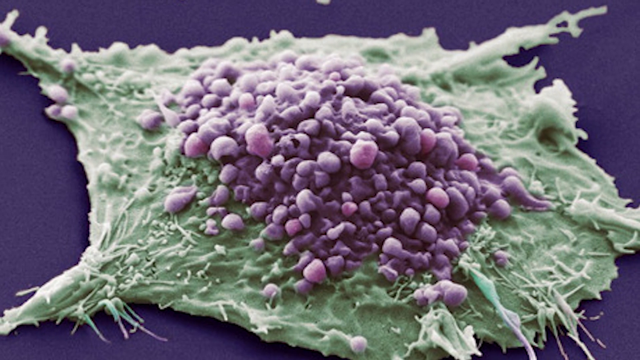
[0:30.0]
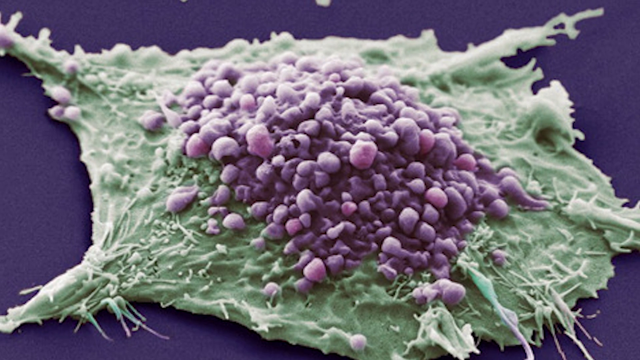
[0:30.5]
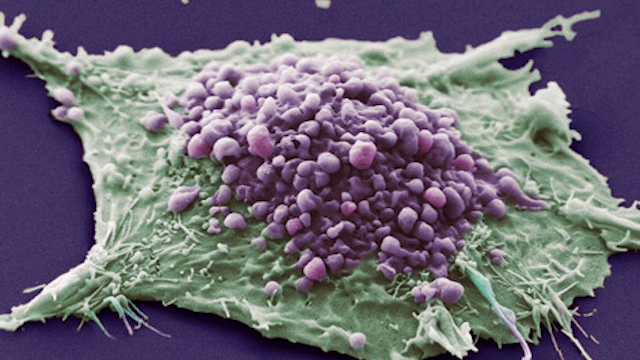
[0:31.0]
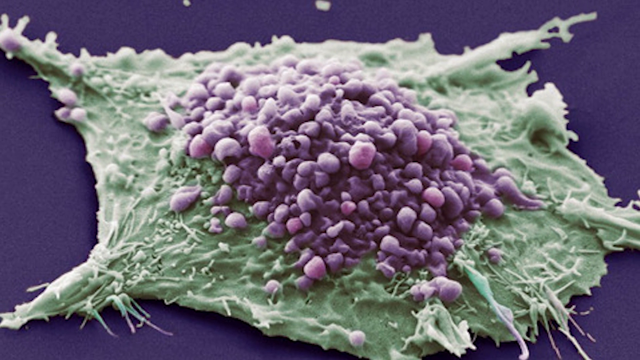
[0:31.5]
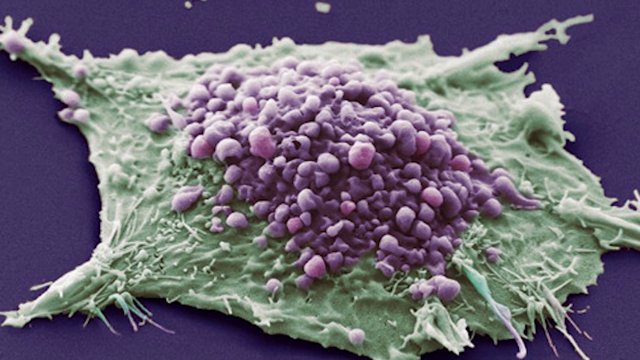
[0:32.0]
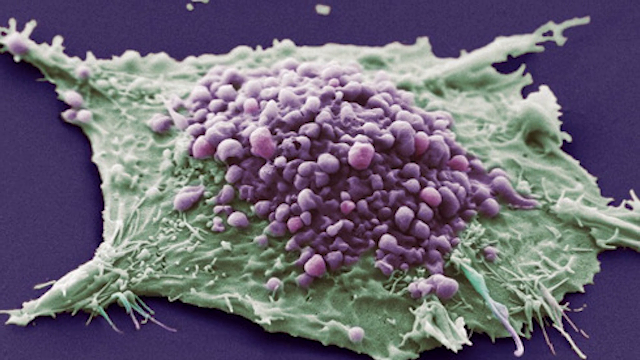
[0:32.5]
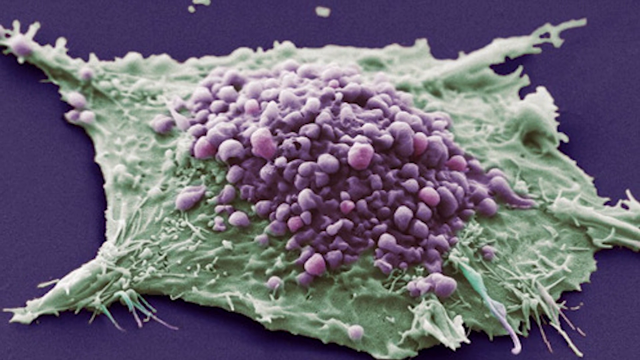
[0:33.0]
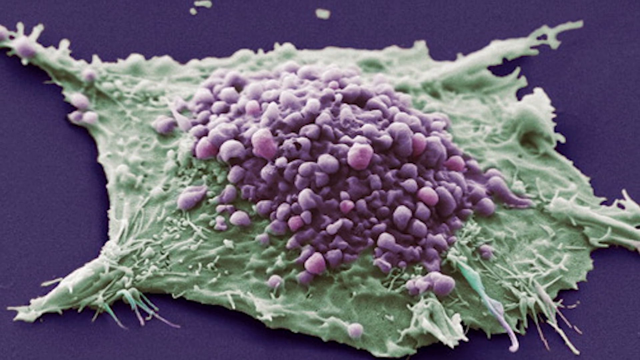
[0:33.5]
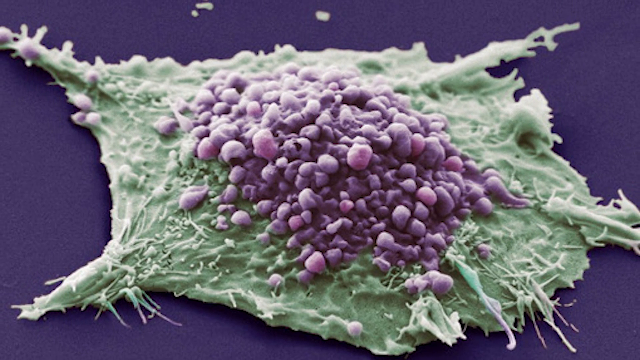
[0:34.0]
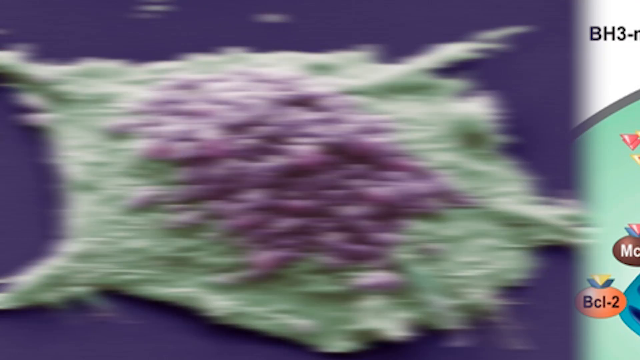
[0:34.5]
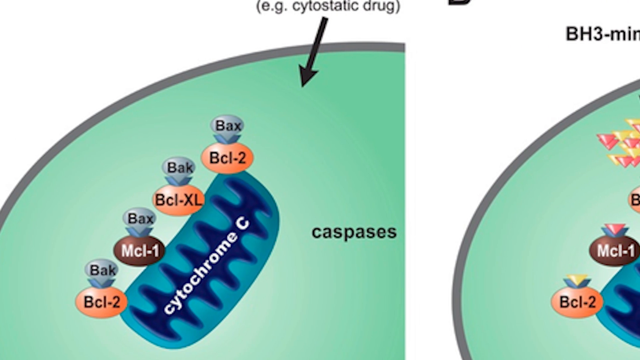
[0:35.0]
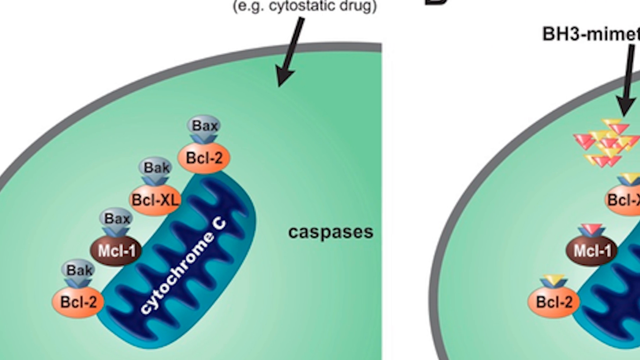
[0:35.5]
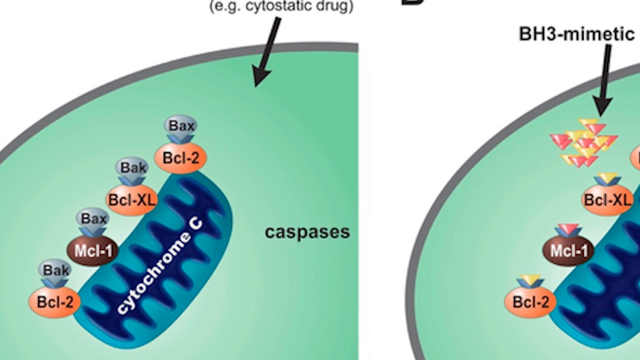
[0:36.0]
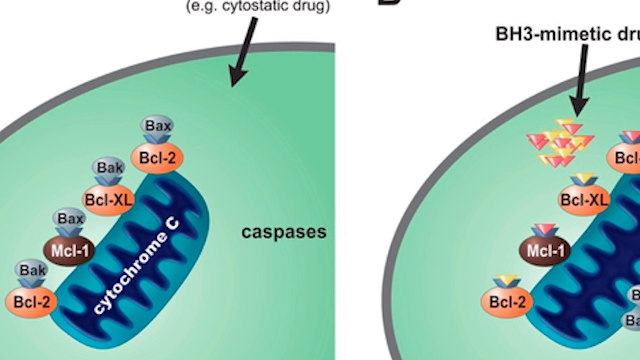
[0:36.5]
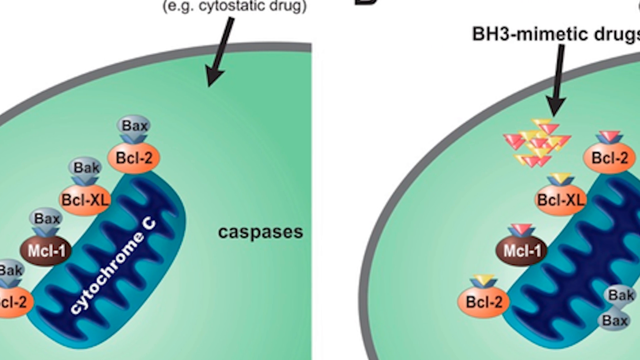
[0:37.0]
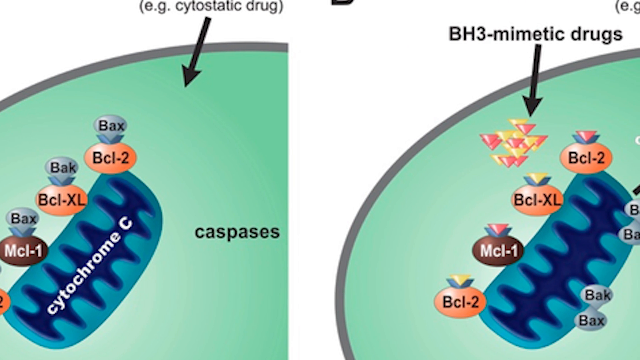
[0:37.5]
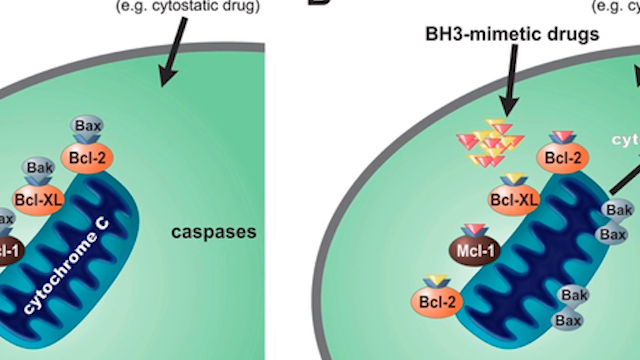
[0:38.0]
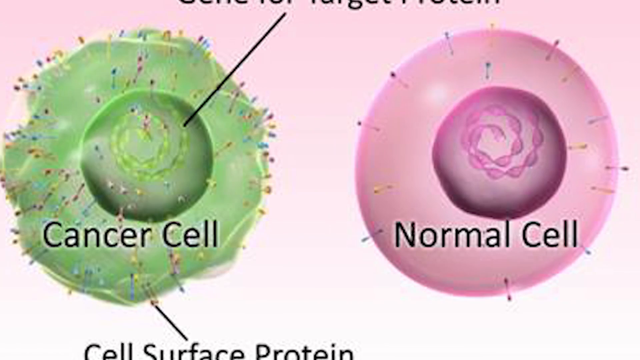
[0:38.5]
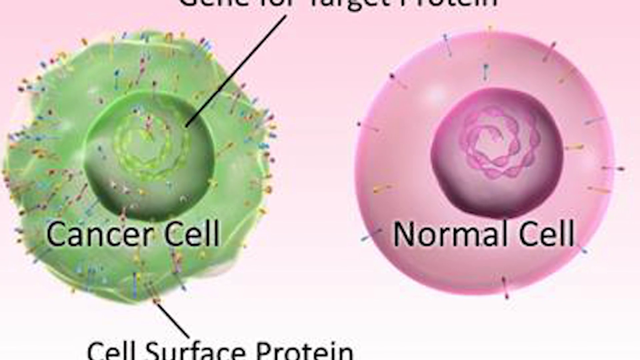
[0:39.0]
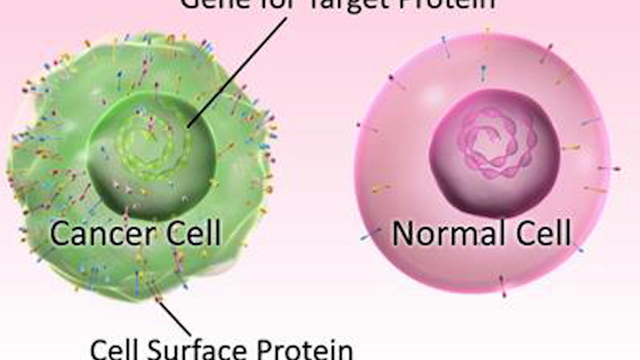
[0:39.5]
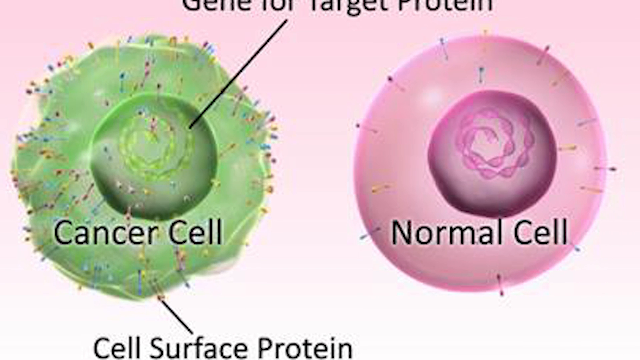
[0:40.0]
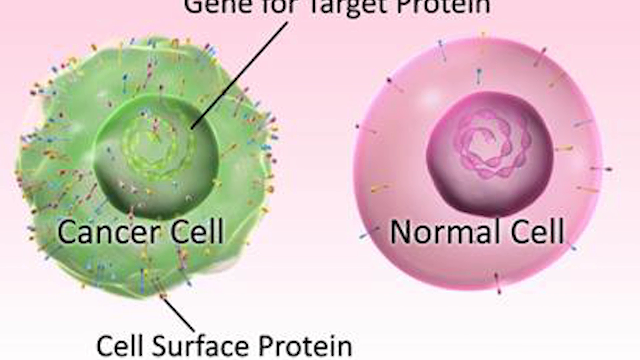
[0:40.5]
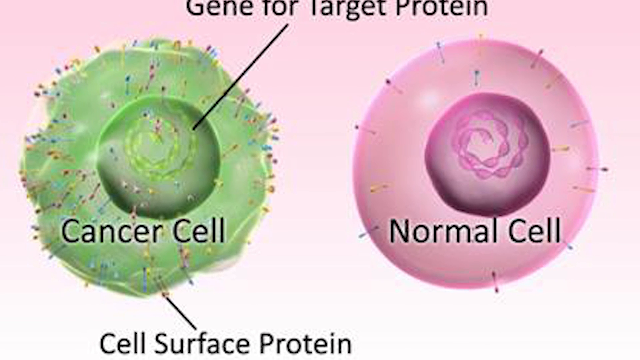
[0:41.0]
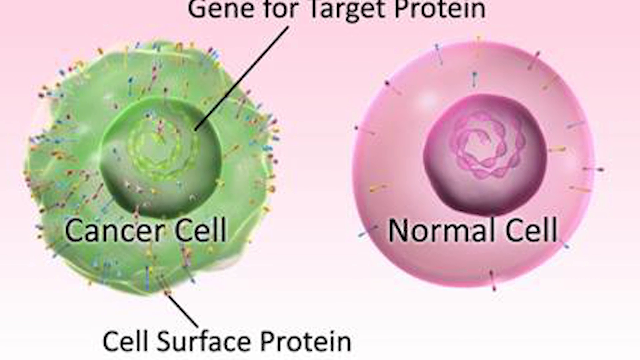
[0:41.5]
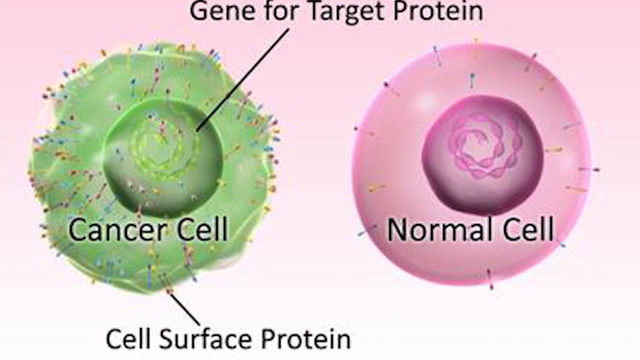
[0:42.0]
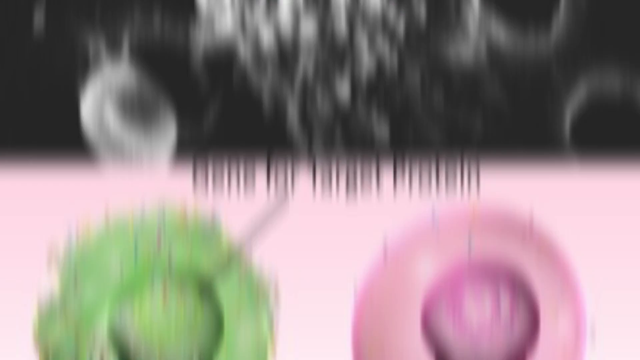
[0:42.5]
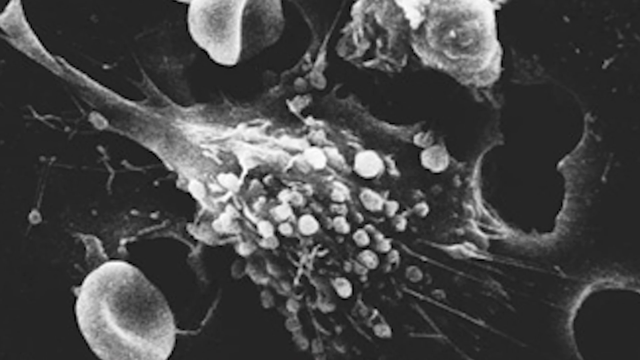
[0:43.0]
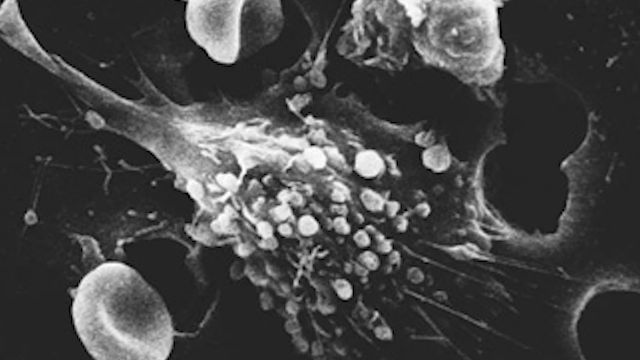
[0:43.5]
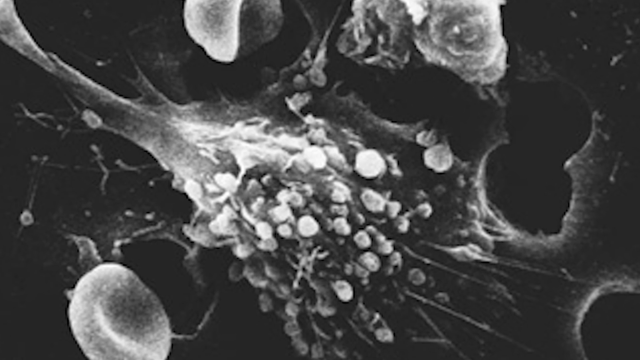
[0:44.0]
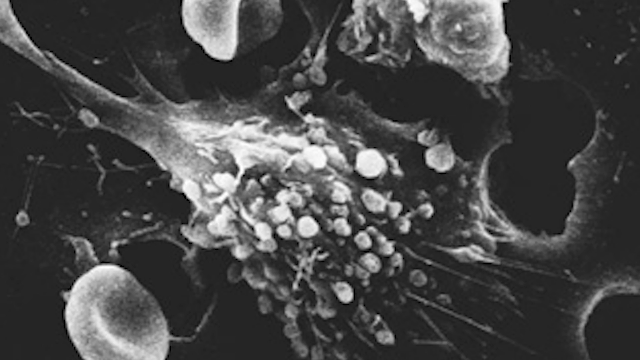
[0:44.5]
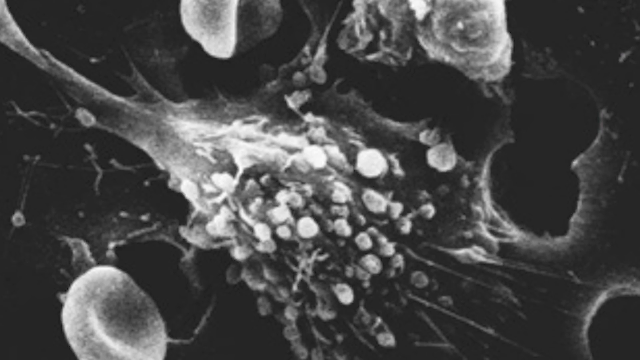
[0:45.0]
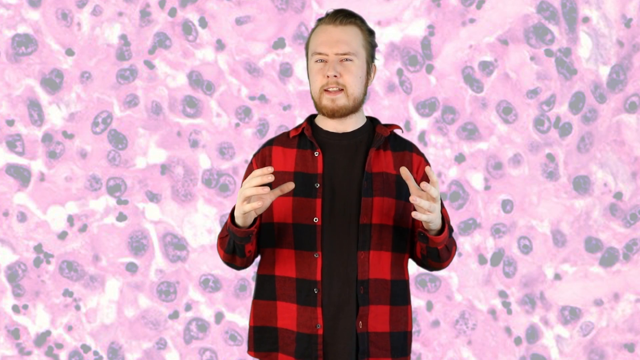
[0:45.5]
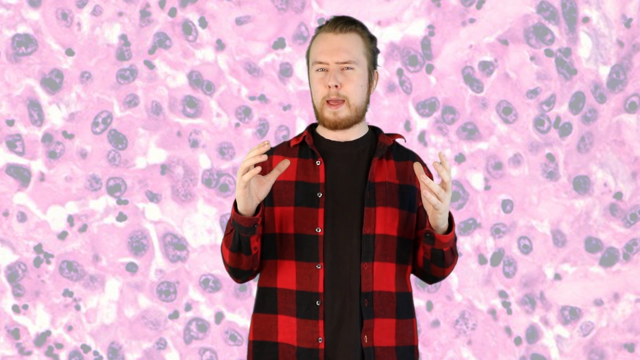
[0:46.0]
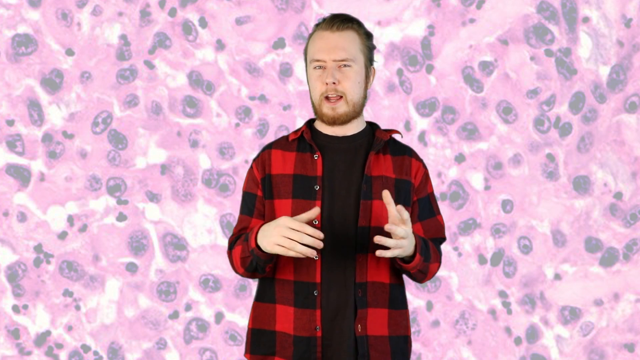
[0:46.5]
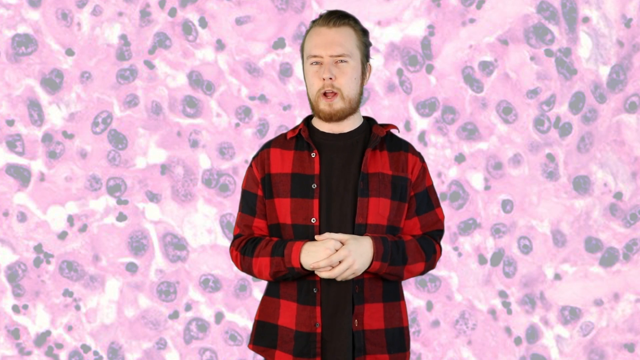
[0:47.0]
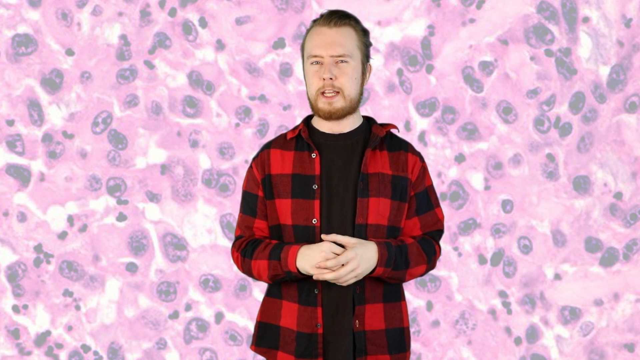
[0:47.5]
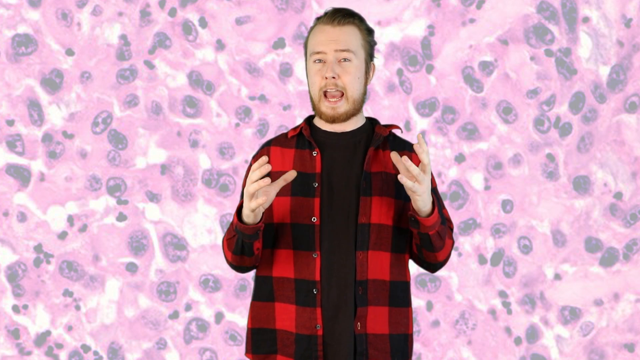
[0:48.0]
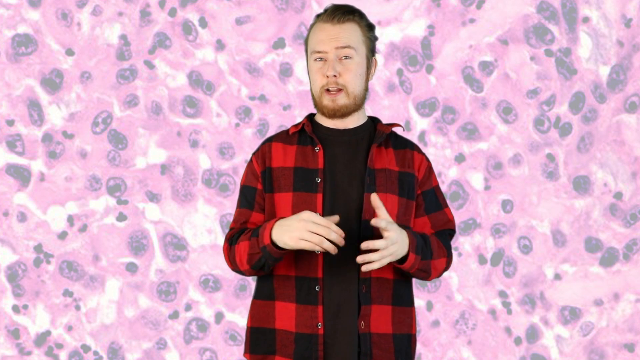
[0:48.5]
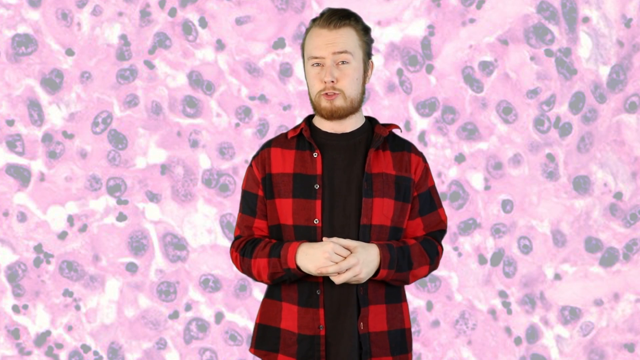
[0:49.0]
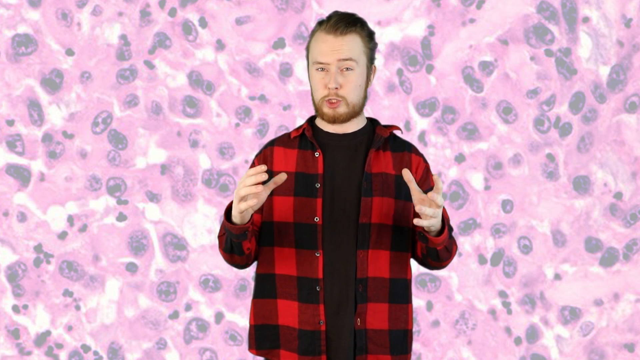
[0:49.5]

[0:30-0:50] A close-up shows what looks like a group of molecules resembling a bunch of purple grapes plopped onto a big blob of green play-doh. The camera slowly zooms out, and the video switches to an animation moving toward the left. It shows molecules grouped together, some labeled "BAX" and some labeled "BC-2". An arrow at the top labeled "cytostatic drug" points down at a light green circular pattern that is gray on the outside. The view slowly moves left as the right side comes in, and for a split second text near the top reads "BH-3 memetic drugs". Another page follows with two animated cells: the one on the left, in green, is labeled "cancer cell", and the one on the right, in pink, is labeled "normal cell". The view slowly zooms out to show the words "gene for target protein" at the top. It then zooms into a black-and-white image that looks kind of like an x-ray, a blob of white with smooth material all around, apparently highly magnified like something cellular under a microscope. The video returns to the man talking, wearing a light-colored shirt, with a beard and light brown hair. He holds his hands up in front of him, wide open, kneels down a little and crunches, then puts his hands together in front of his chest for a moment. He talks the entire time, his mouth moving as if enunciating clearly. His hands separate again and open up at shoulder height, shaking a little, before he puts them together briefly and pulls them apart again.